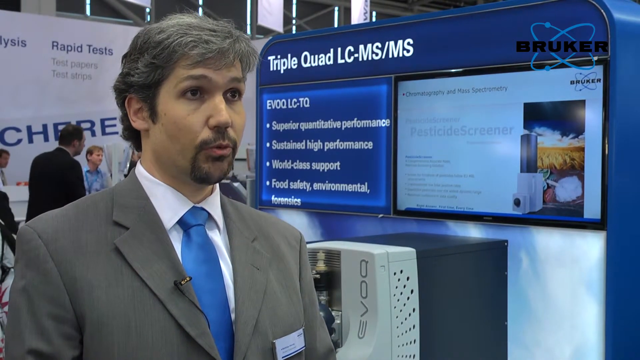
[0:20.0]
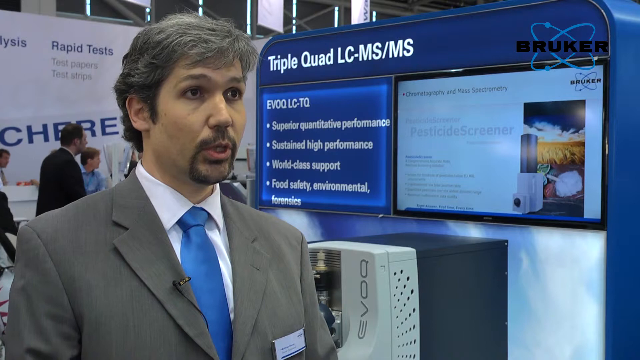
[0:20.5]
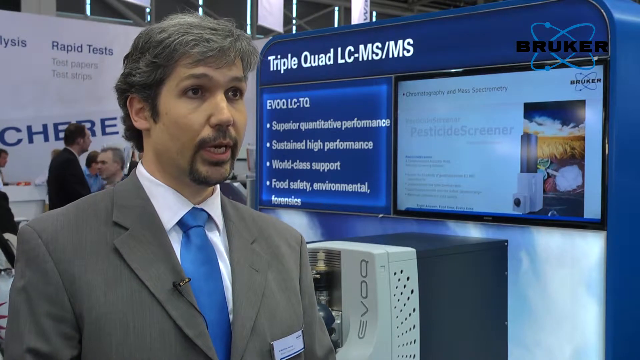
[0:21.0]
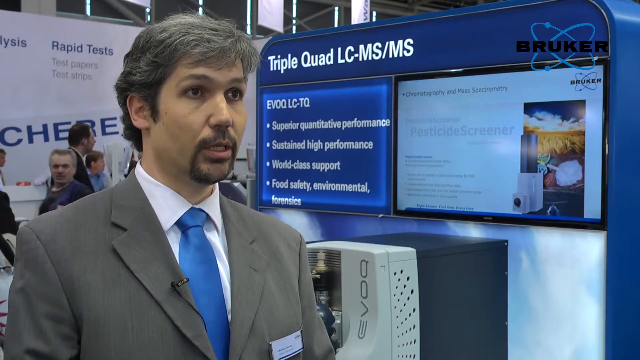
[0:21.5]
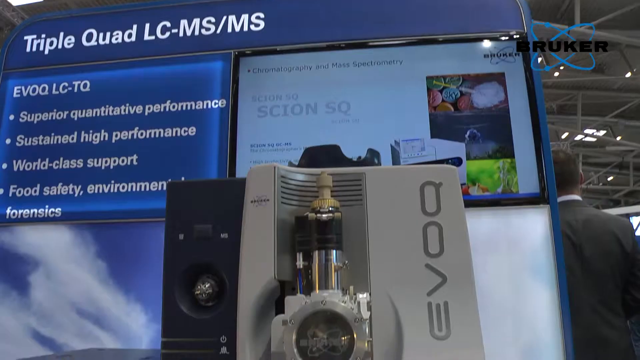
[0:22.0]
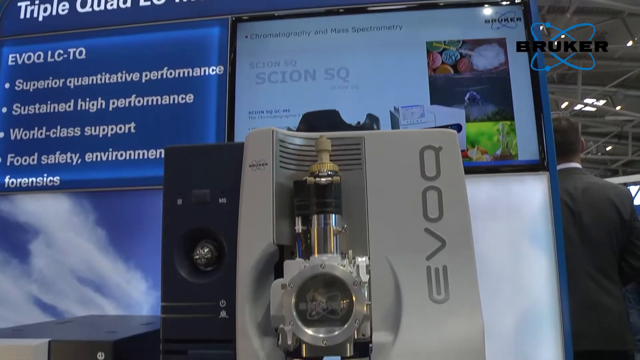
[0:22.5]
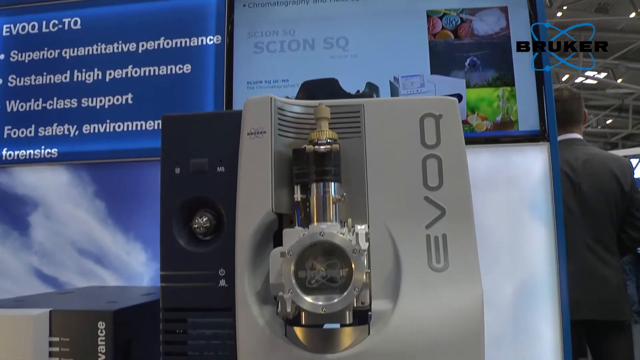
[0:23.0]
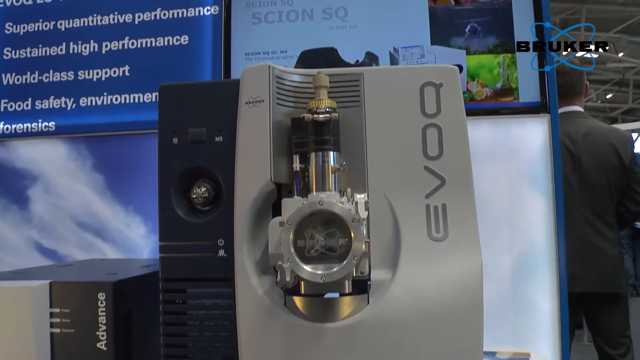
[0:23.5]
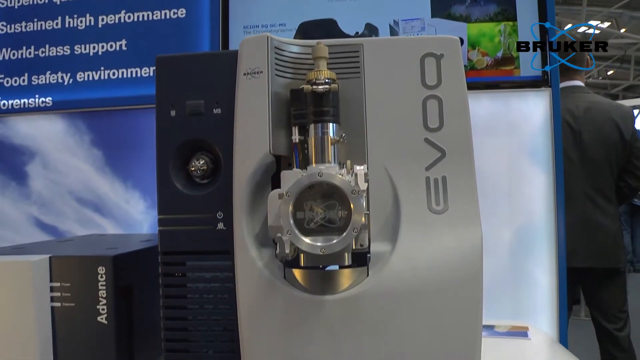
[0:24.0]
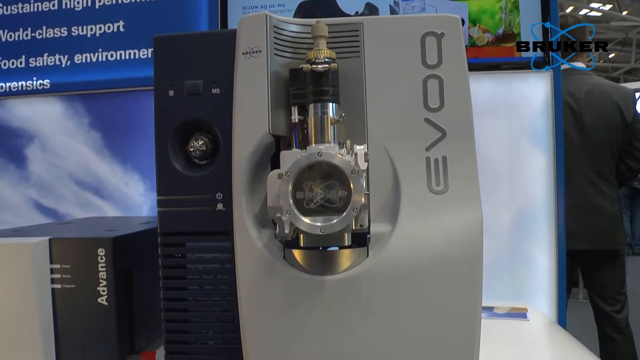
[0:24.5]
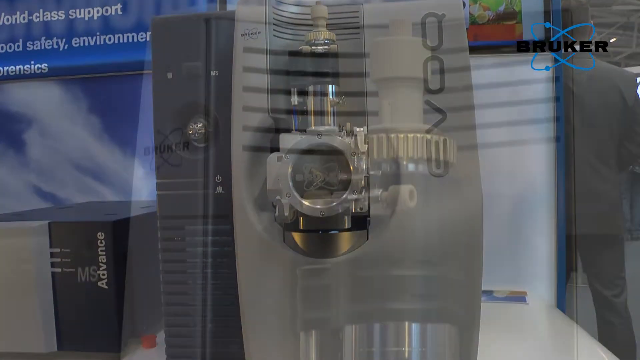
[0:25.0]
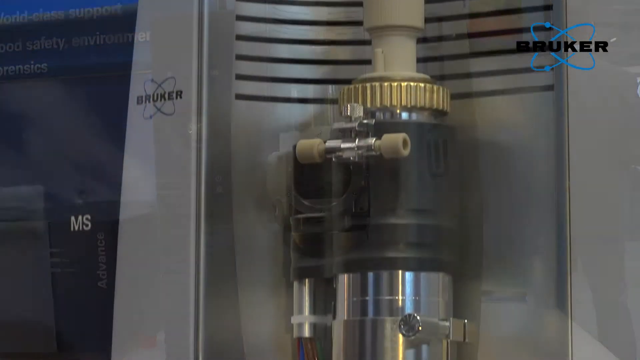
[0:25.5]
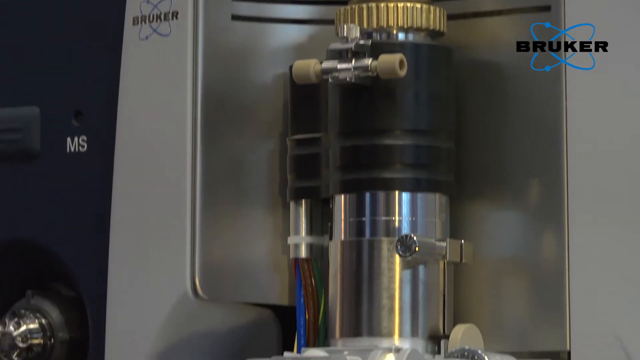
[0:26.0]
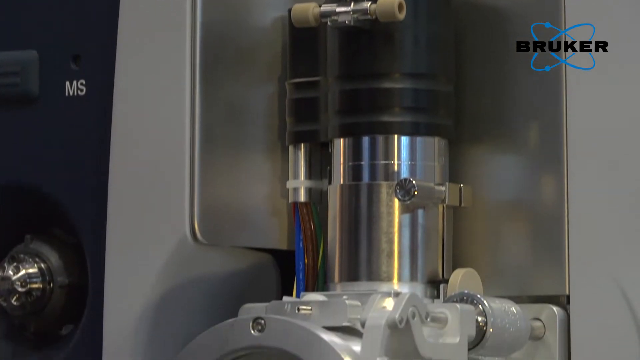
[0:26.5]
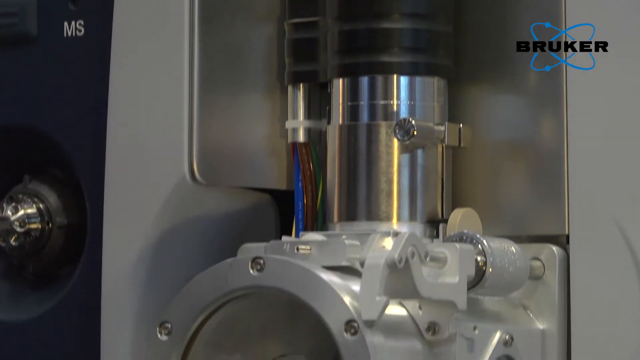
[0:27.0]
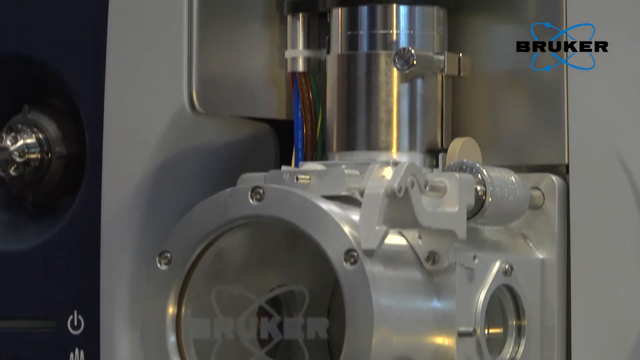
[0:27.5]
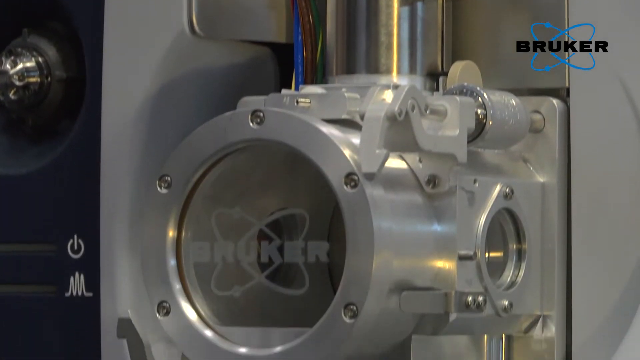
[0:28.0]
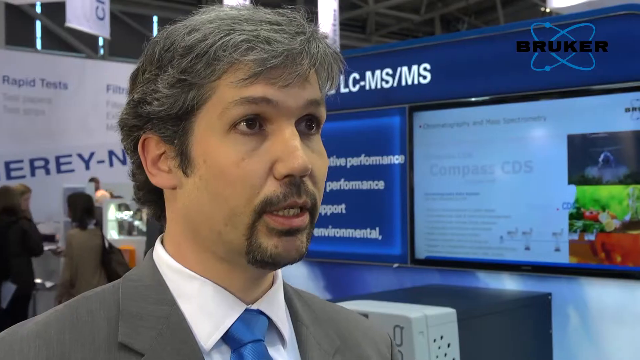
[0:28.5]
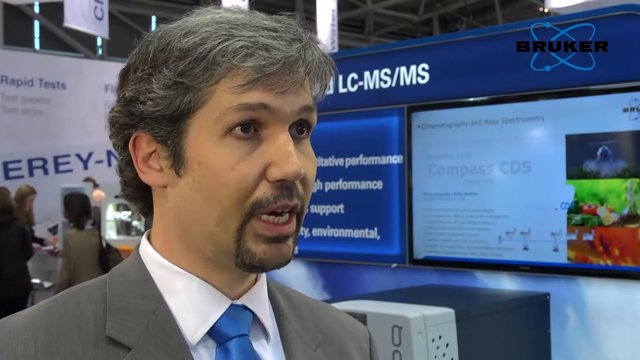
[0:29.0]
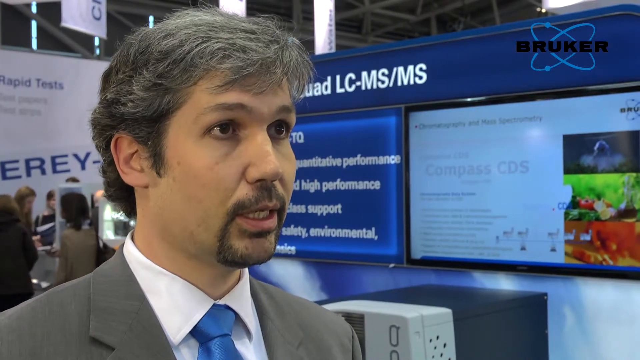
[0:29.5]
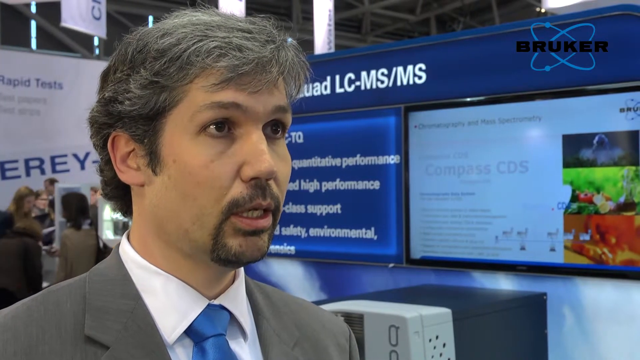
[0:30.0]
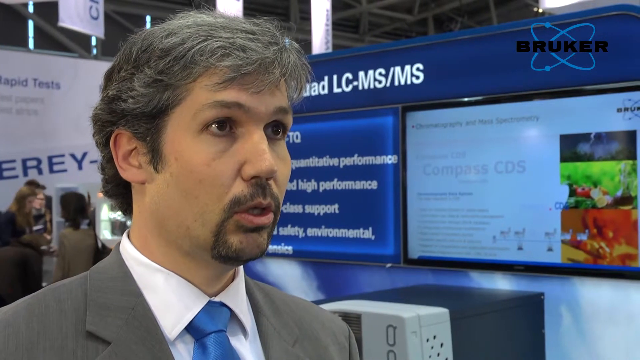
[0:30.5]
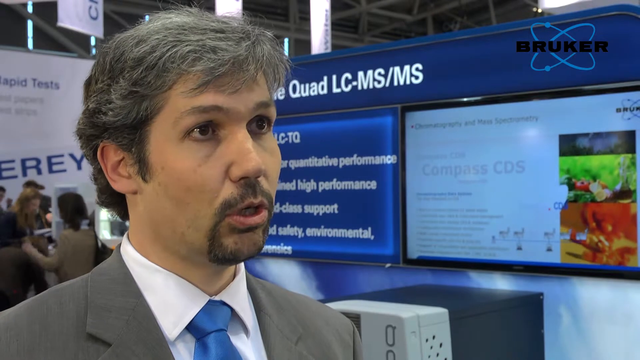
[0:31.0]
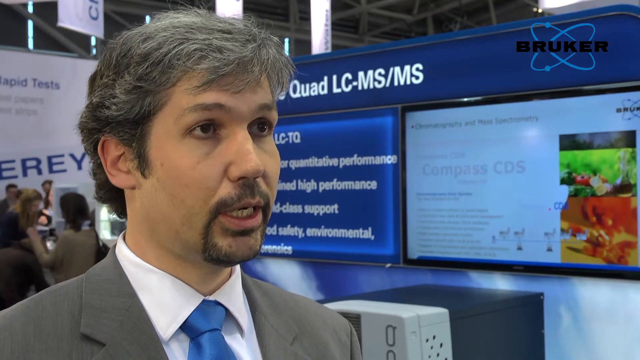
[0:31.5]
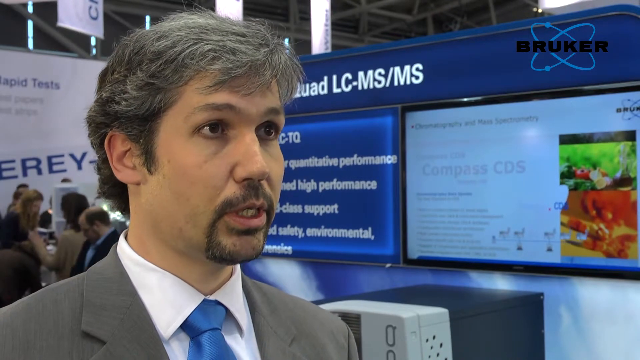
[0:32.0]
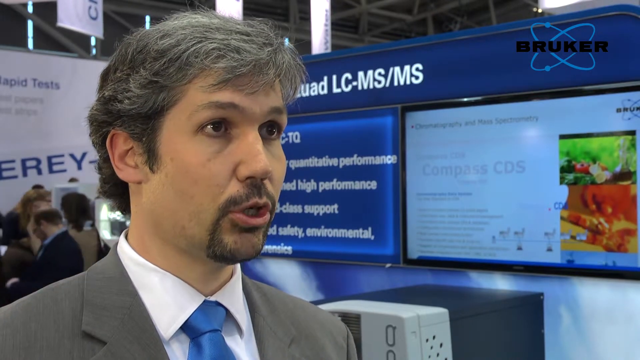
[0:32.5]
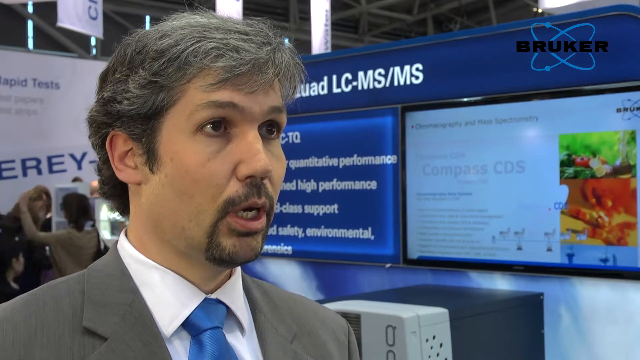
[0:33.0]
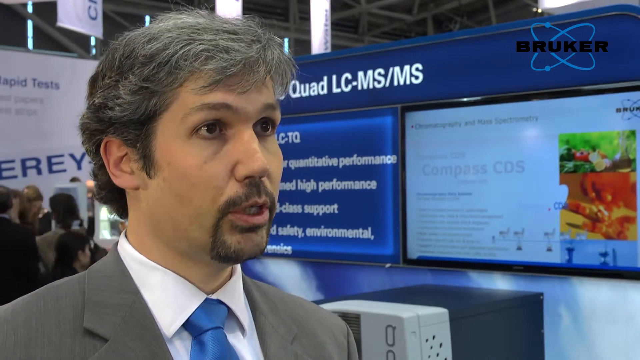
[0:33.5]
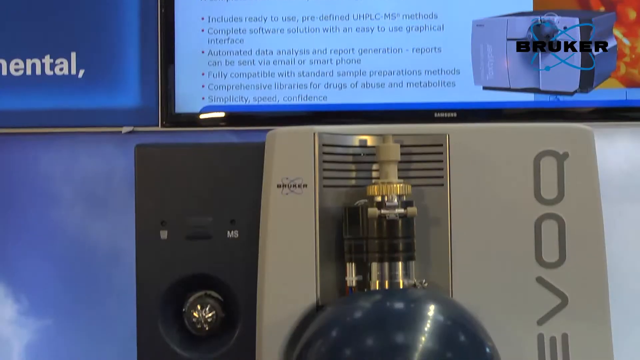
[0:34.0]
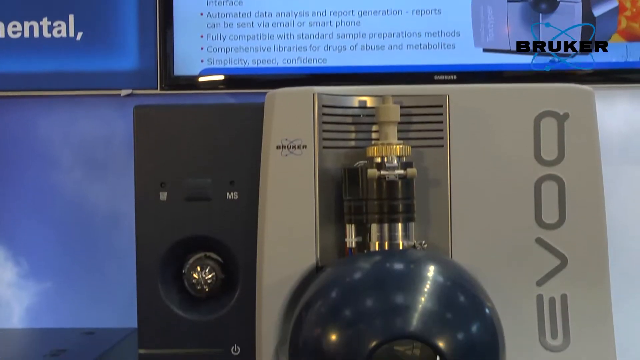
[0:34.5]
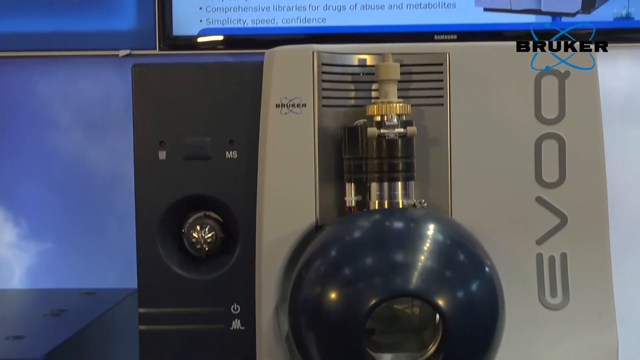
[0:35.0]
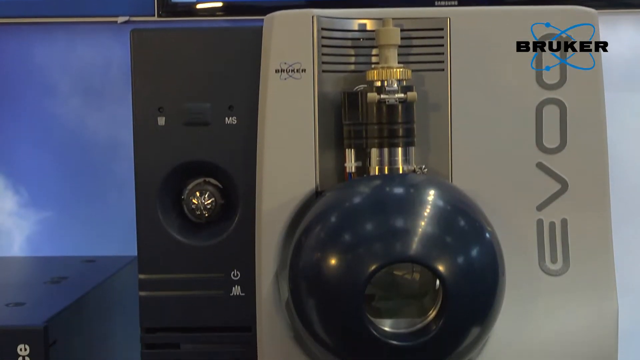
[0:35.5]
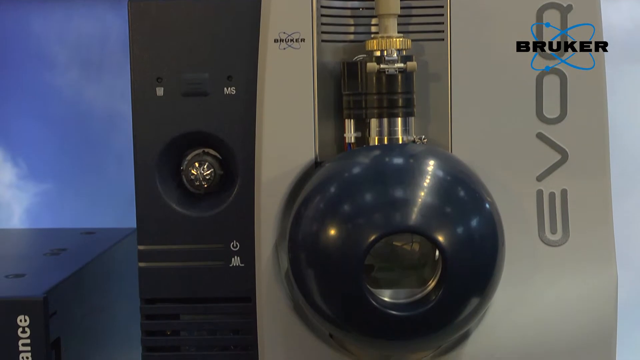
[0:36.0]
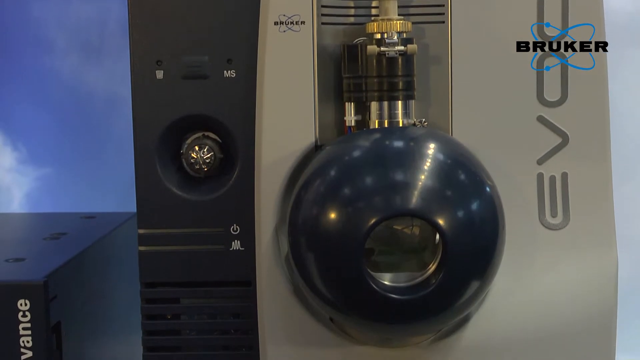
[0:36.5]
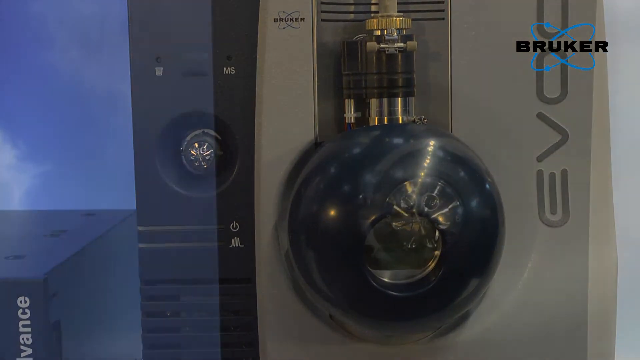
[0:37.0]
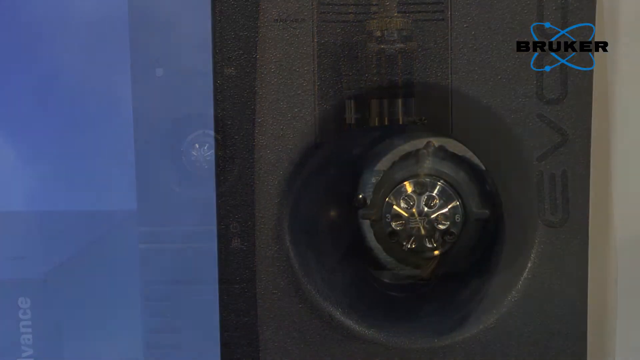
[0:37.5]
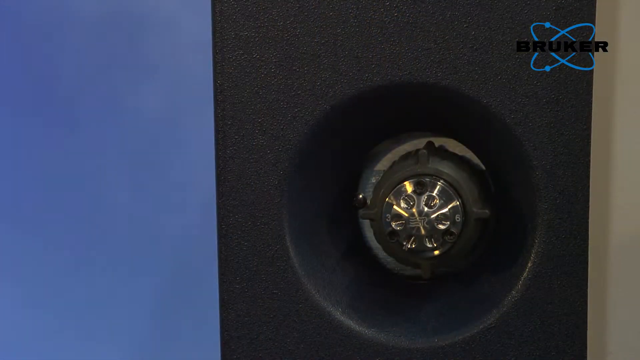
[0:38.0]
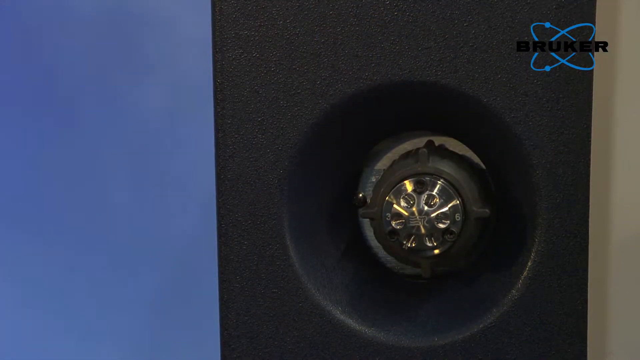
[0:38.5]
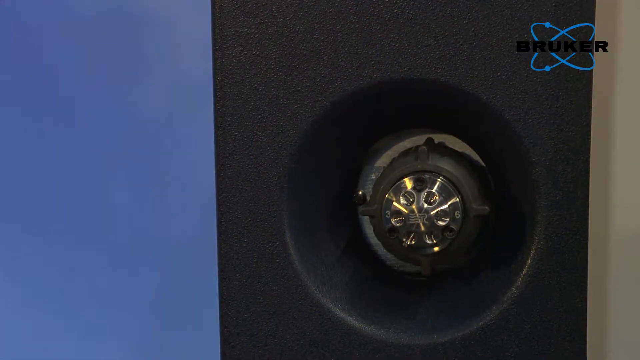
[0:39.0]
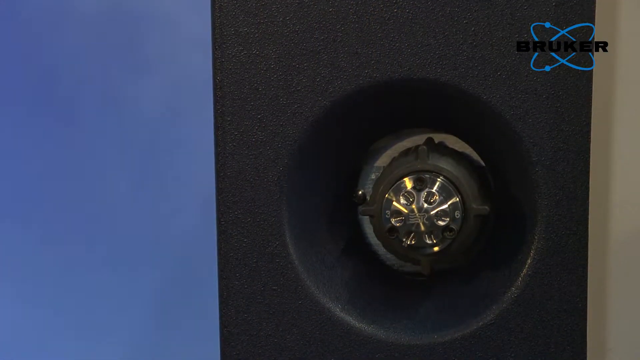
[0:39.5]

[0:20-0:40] The man, wearing a gray suit, white shirt and blue tie, with a mustache and gray hair, talks to the camera while facing right. Behind him a display reads "triple quad lc-ms/ms." The camera changes to pan down over the machinery, which is gray and black with a valve in the center and "evoc" at the top right. The camera zooms in on the valve, then pans back to the man speaking. In the background a presentation scrolls on two screens: bullet points on the left screen, and a paragraph and a moving picture on the right screen. The camera pans back to the machinery and zooms in on specific parts, such as a screw. Everything takes place in a convention center, where other people in the background walk around and converse among themselves while the man talks to the camera.